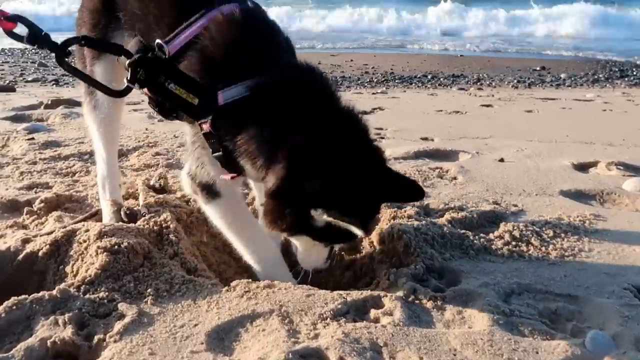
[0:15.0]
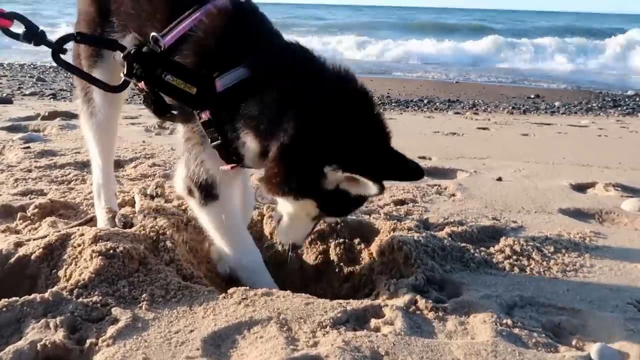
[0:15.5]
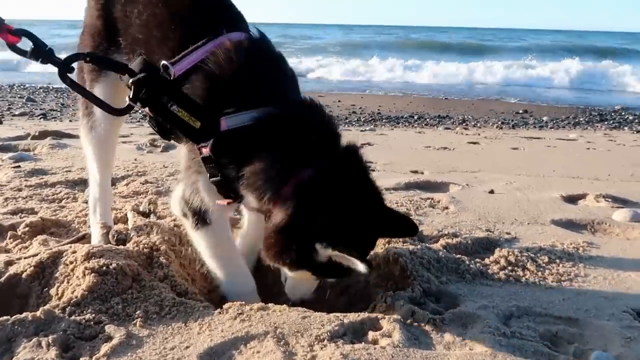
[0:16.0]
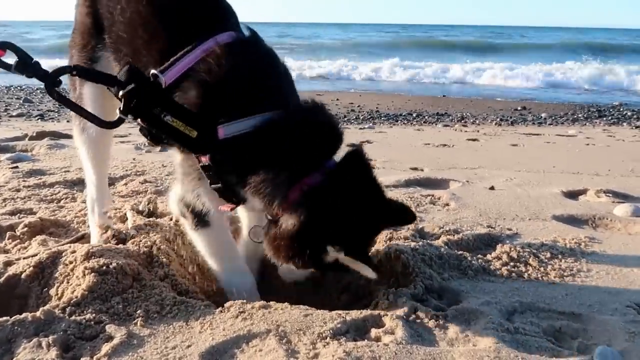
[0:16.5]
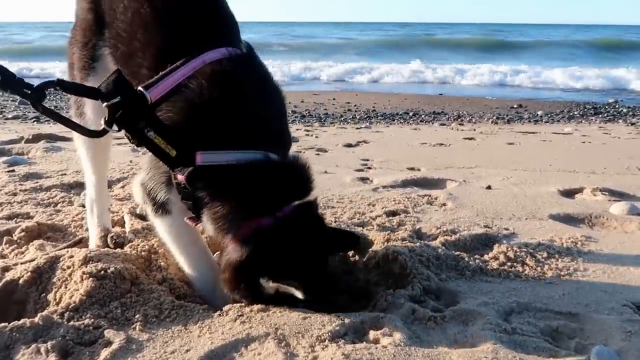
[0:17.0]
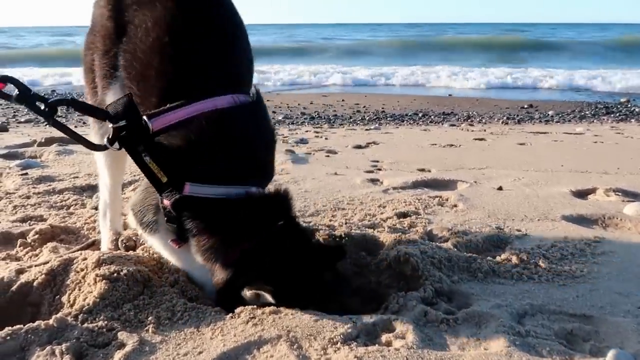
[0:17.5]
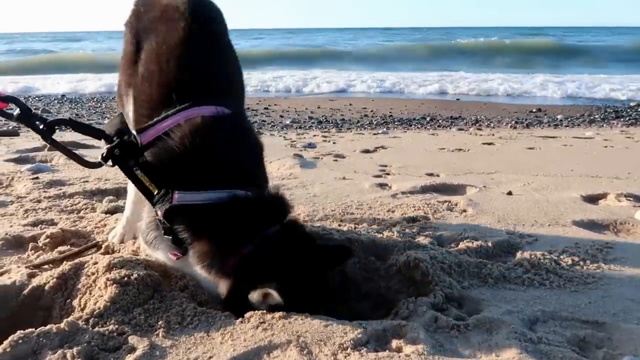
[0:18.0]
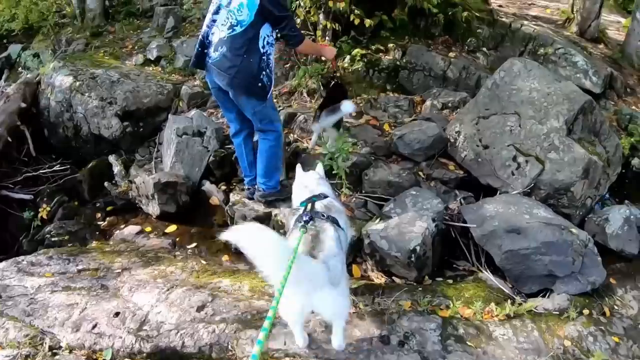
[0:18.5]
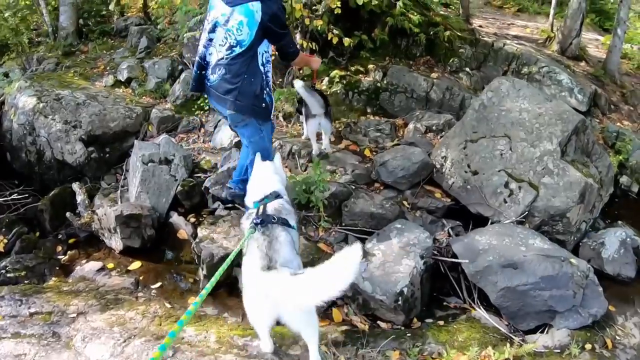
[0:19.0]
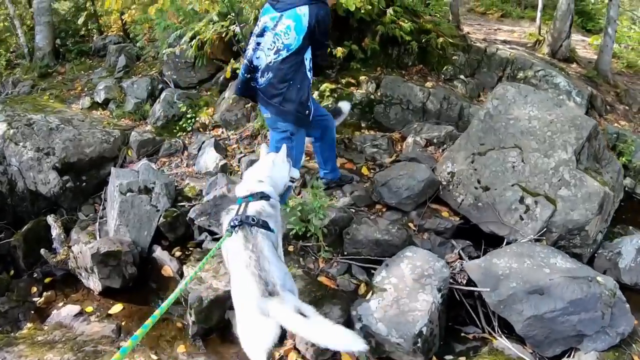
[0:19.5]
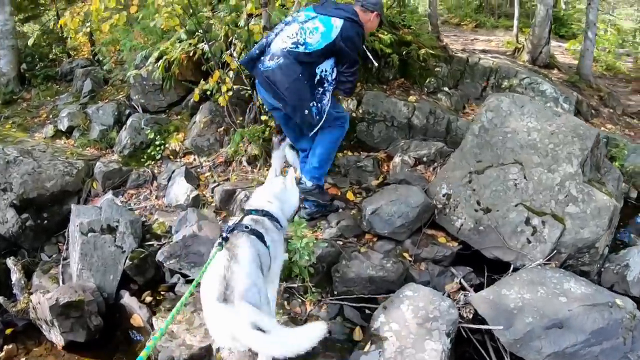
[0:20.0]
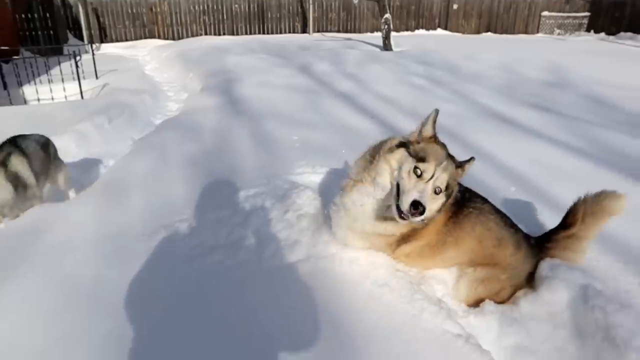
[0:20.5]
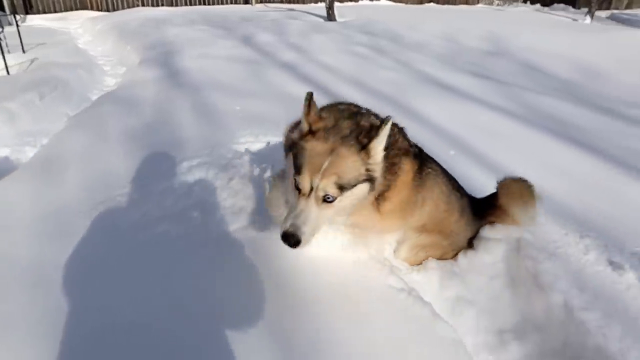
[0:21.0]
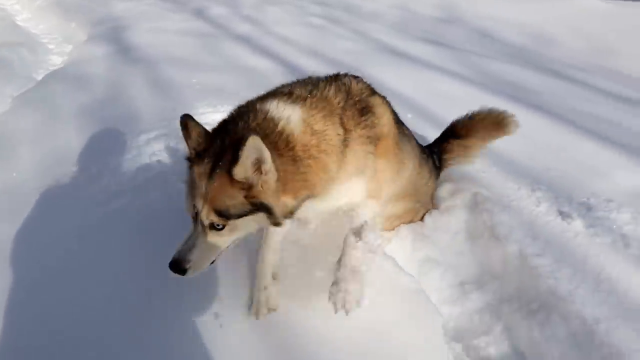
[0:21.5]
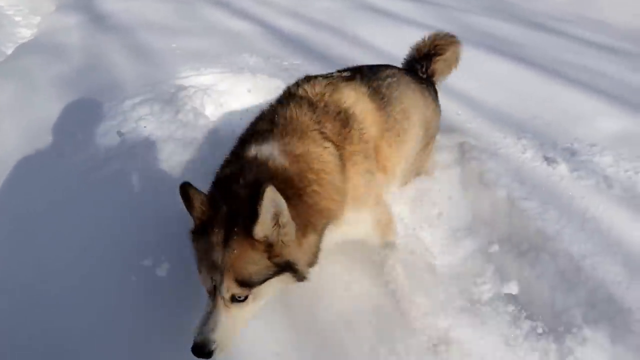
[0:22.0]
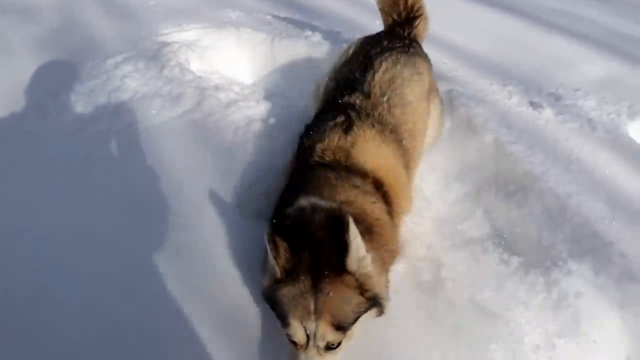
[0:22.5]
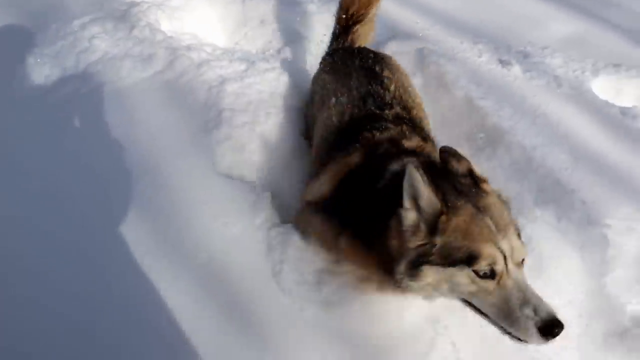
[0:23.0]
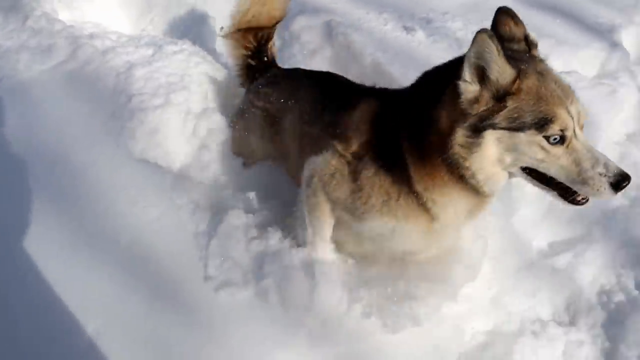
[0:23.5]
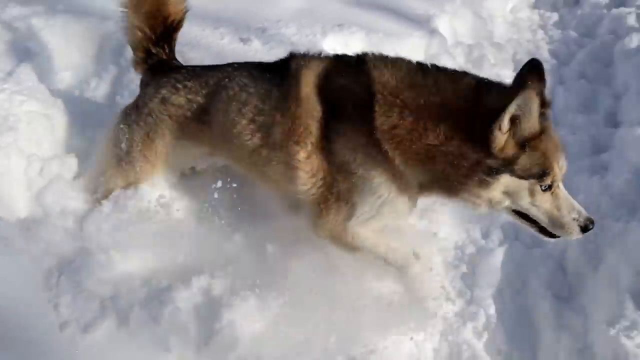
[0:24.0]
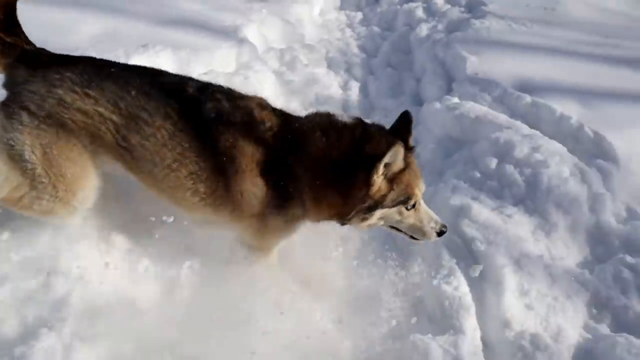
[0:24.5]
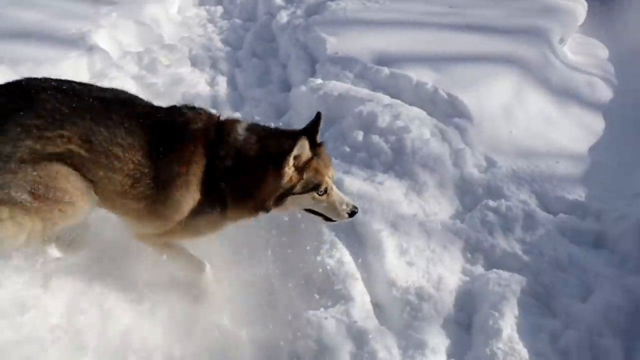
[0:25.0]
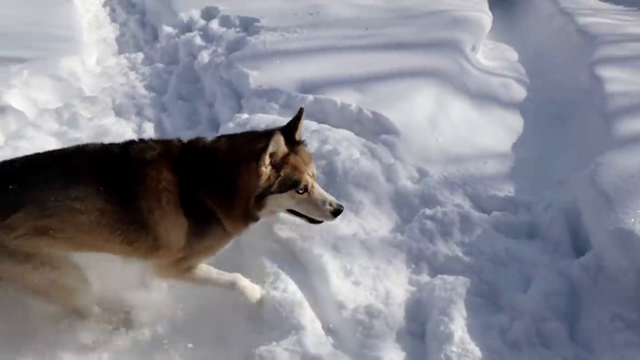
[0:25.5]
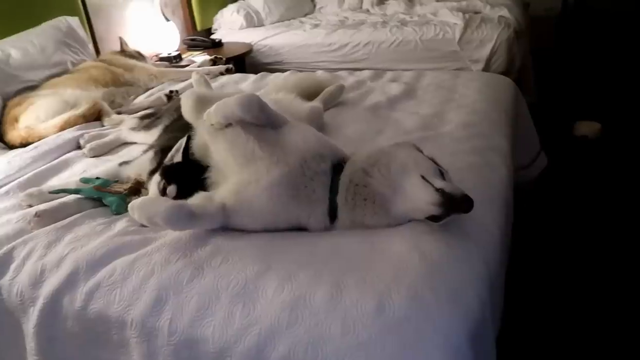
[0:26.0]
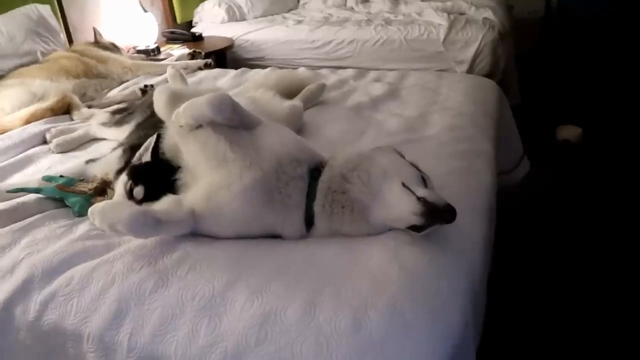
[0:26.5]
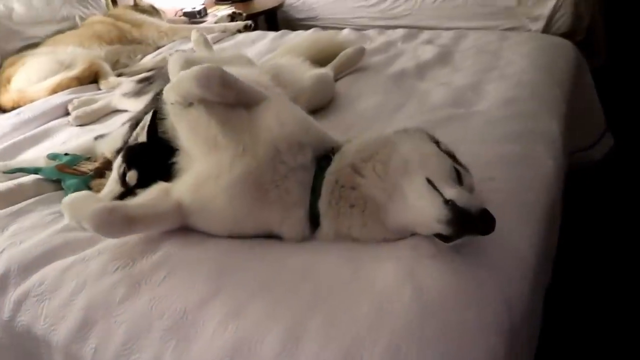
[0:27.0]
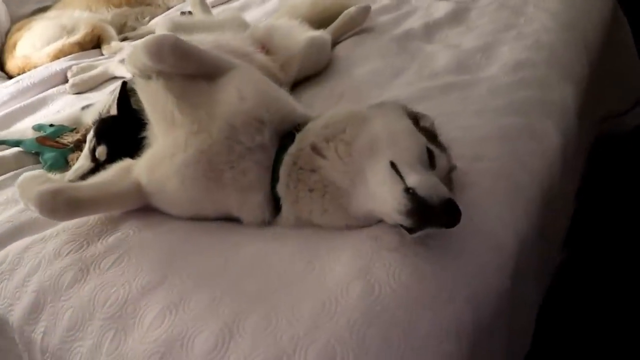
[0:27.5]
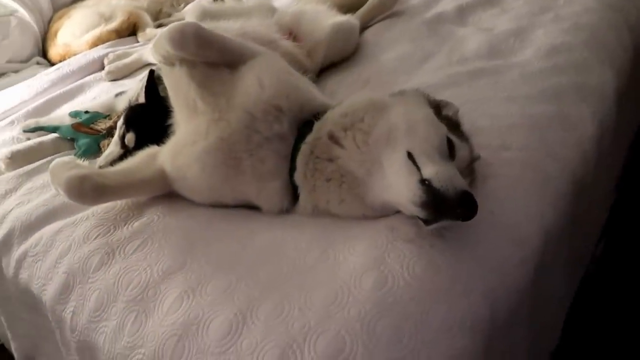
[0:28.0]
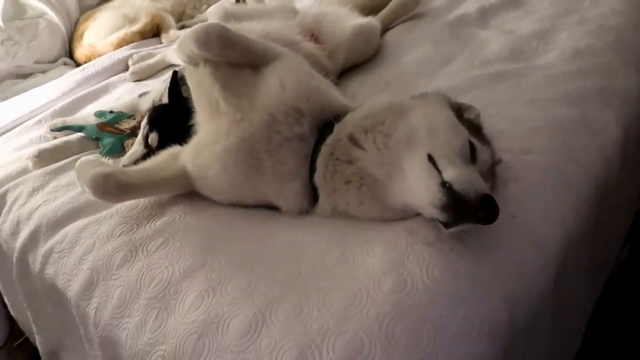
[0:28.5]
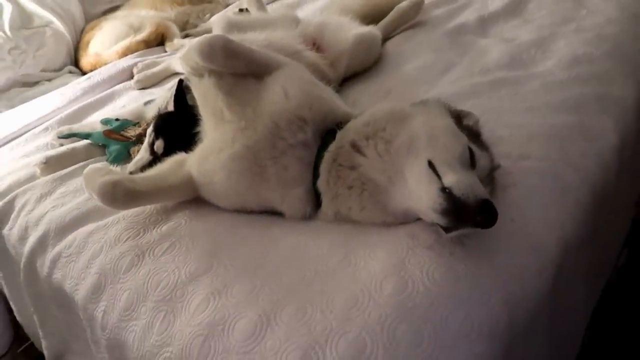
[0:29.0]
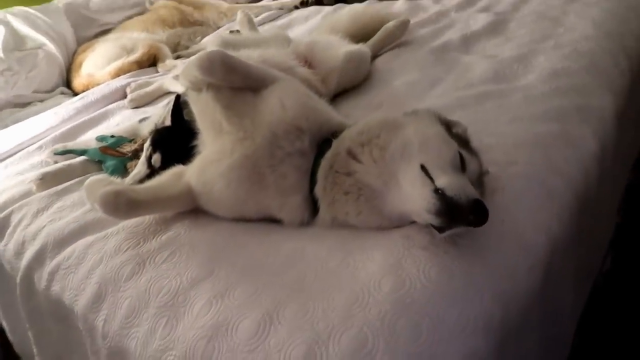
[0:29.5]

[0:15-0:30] Two dogs are shown from several angles, in different settings and at different times of day. They are at the beach, one of the dogs sleeps on a bed, and one plays in the snow; the footage switches to slow motion as the dog jumps through the snow. The dogs are on leashes and are very friendly to each other. At another point they climb over some rocks on what appears to be a nature trail. The dogs have thick but short coats: one is predominantly white with gray, one has a gray, brown and white coat, and another is mostly black and white. They appear very happy, with a couple of different people interacting with them and walking them.